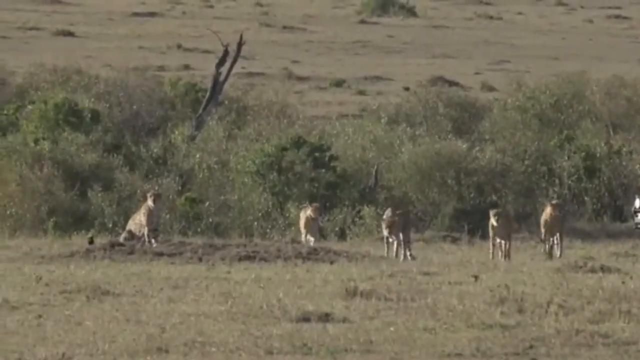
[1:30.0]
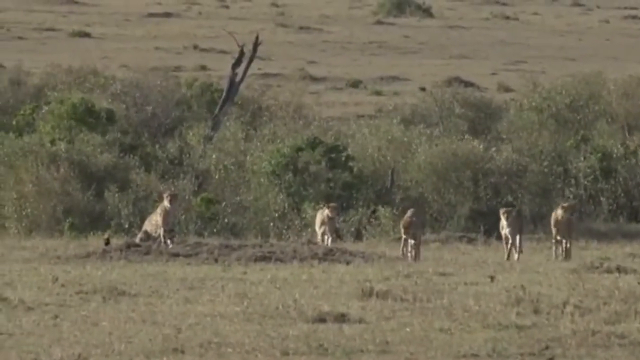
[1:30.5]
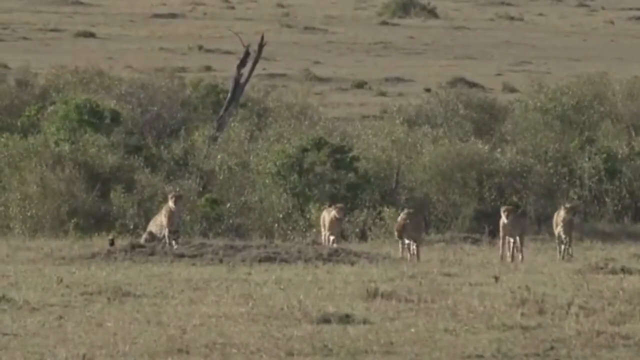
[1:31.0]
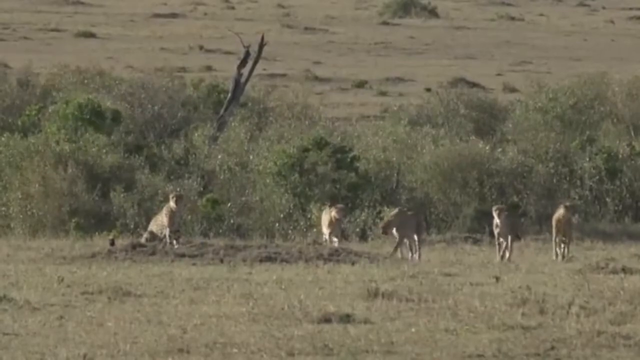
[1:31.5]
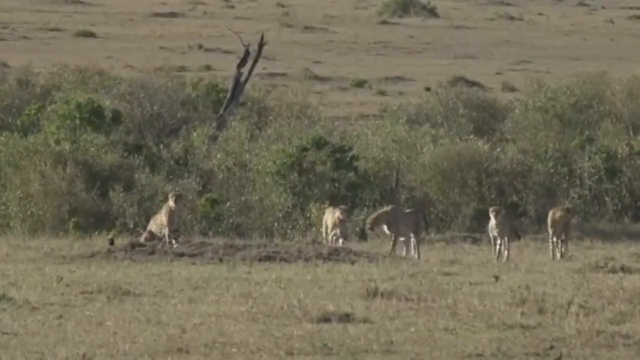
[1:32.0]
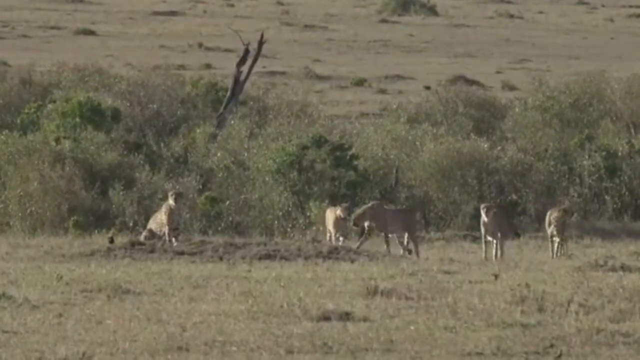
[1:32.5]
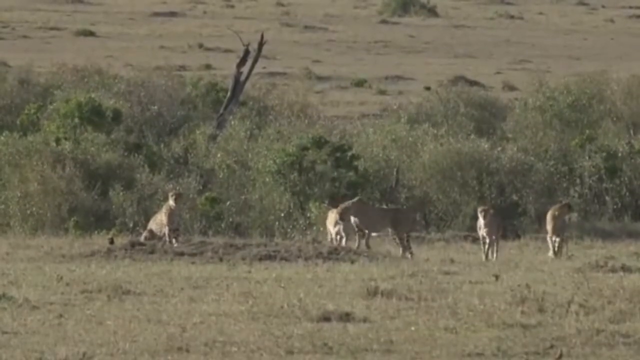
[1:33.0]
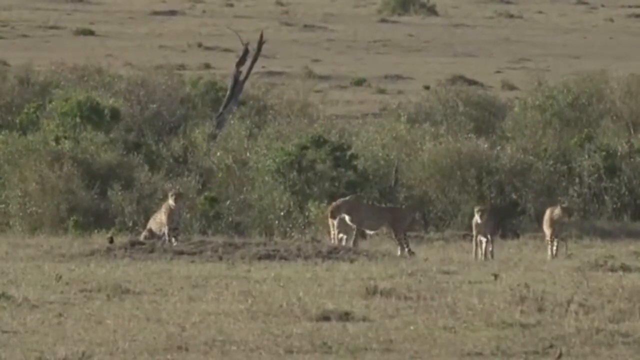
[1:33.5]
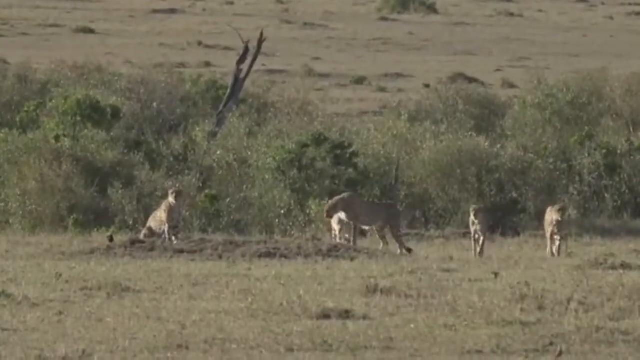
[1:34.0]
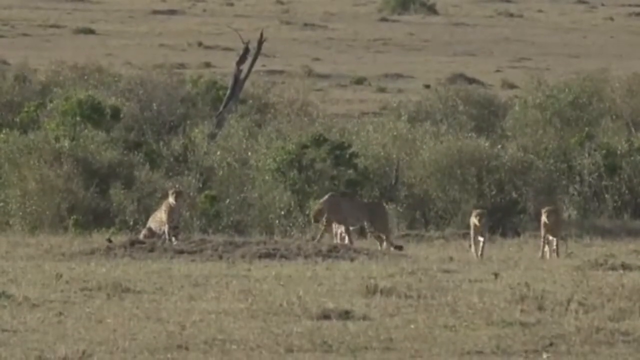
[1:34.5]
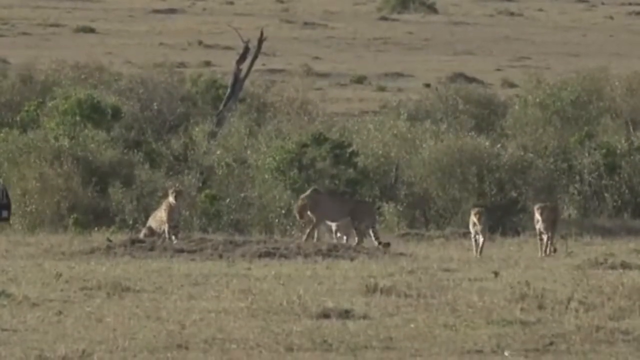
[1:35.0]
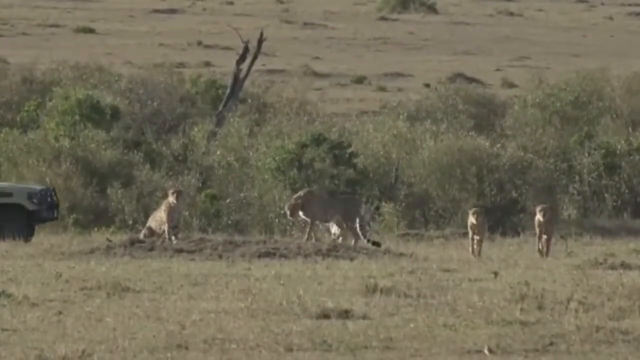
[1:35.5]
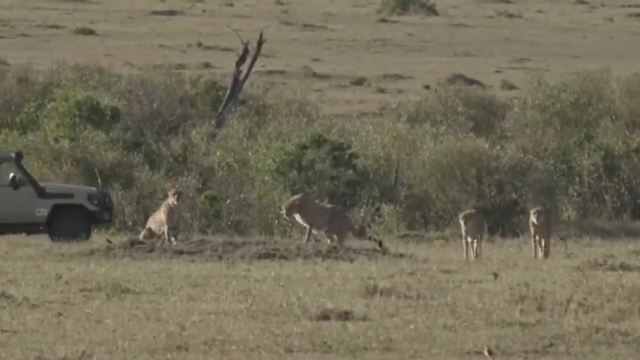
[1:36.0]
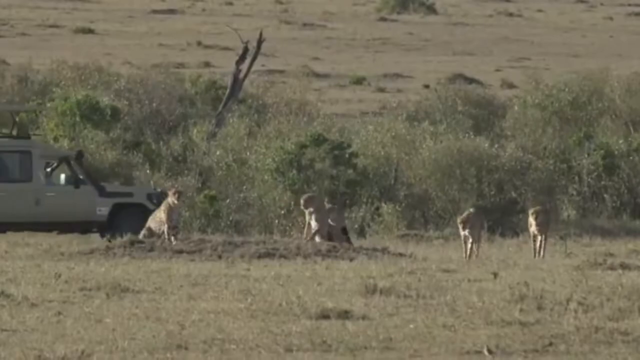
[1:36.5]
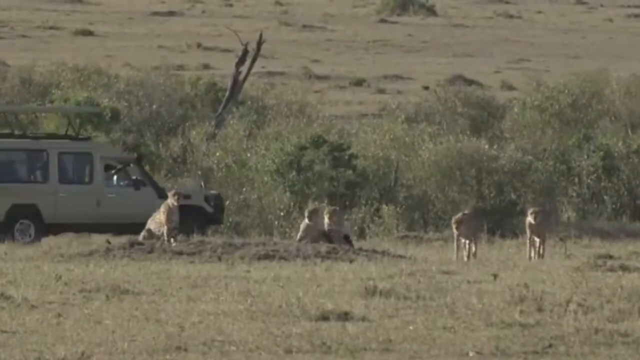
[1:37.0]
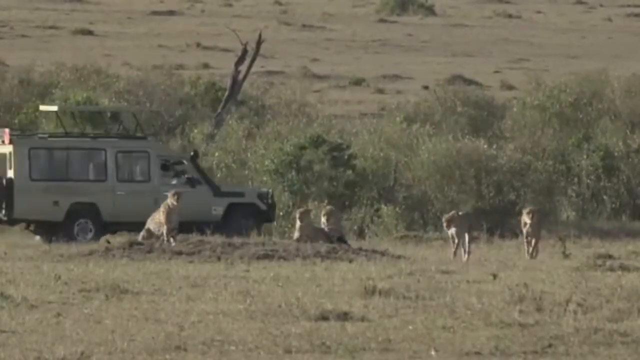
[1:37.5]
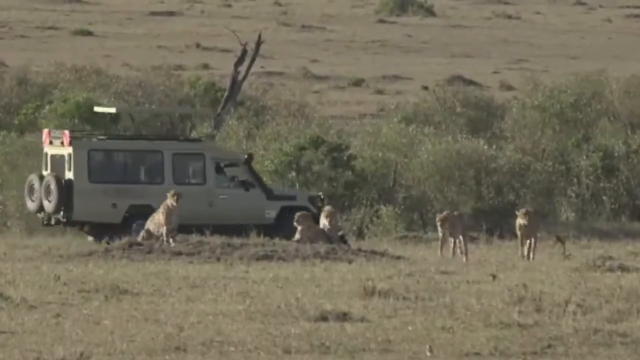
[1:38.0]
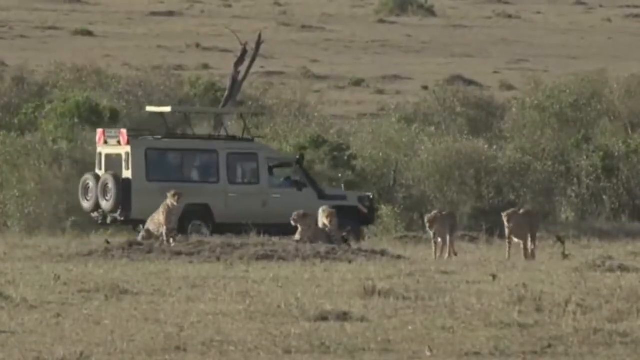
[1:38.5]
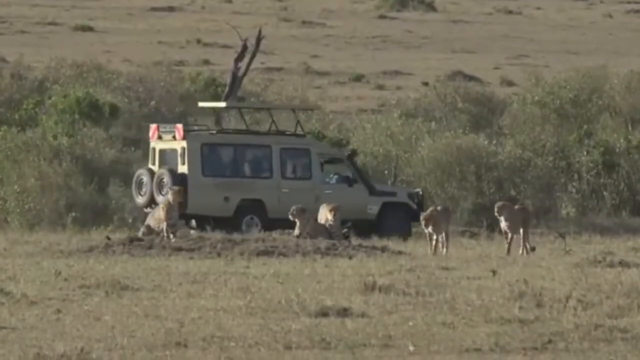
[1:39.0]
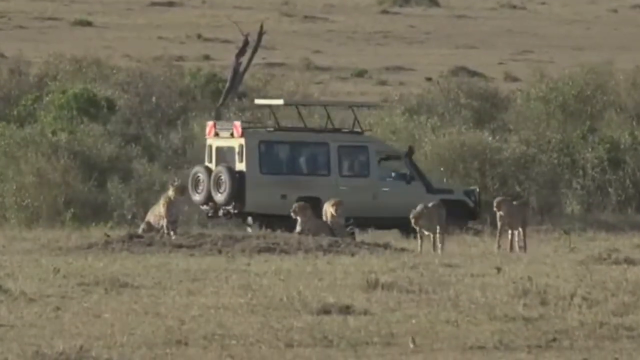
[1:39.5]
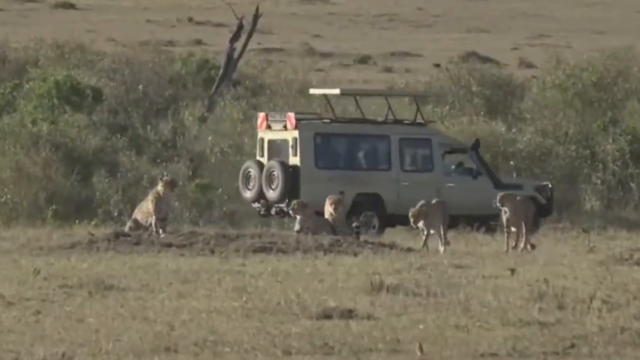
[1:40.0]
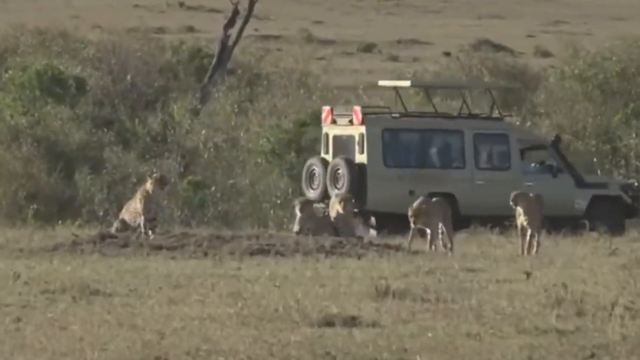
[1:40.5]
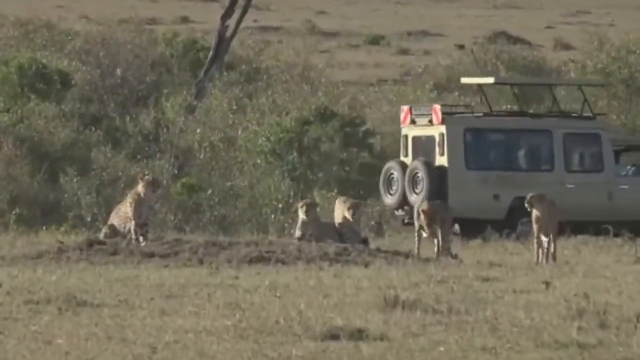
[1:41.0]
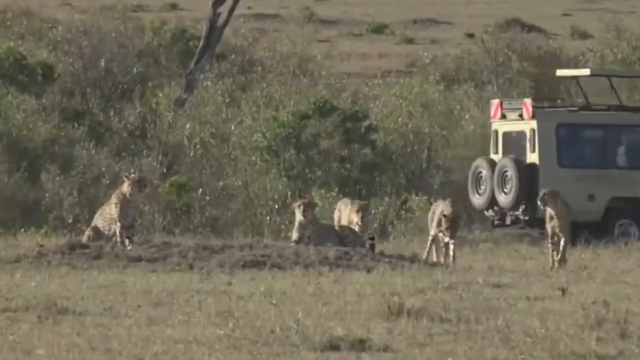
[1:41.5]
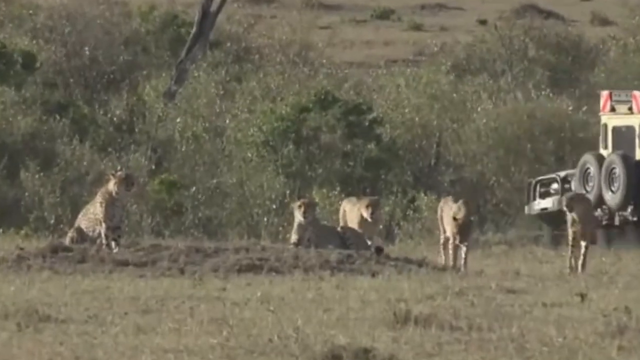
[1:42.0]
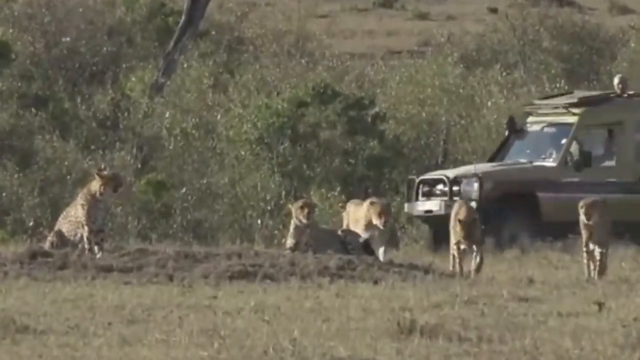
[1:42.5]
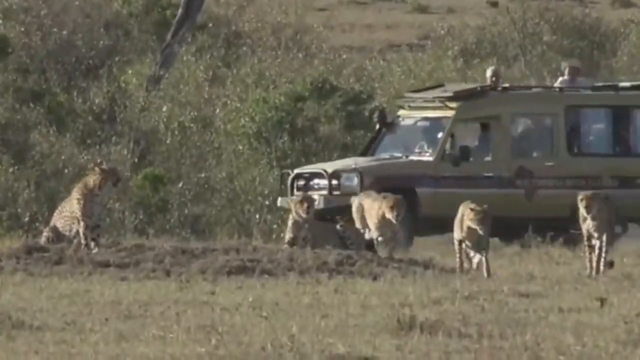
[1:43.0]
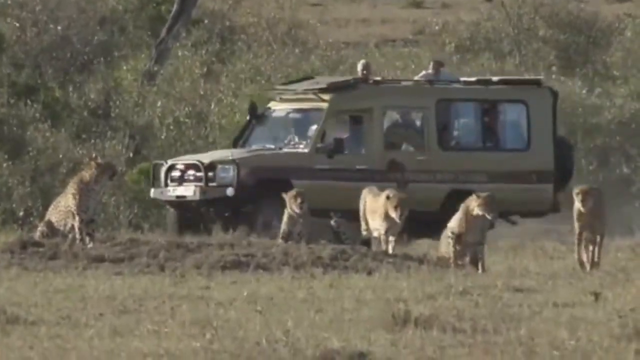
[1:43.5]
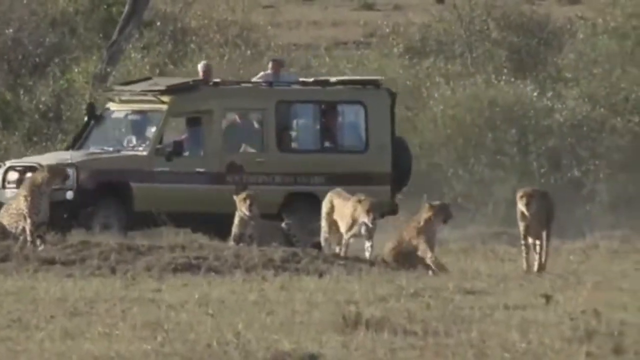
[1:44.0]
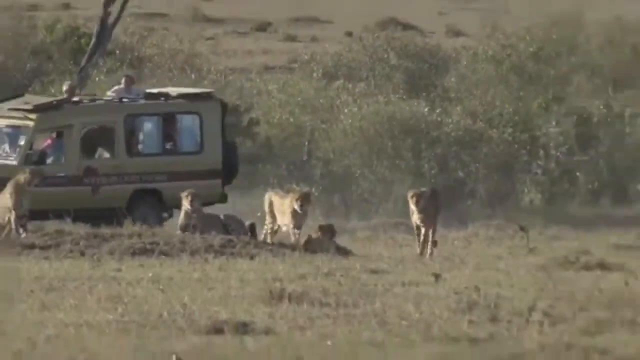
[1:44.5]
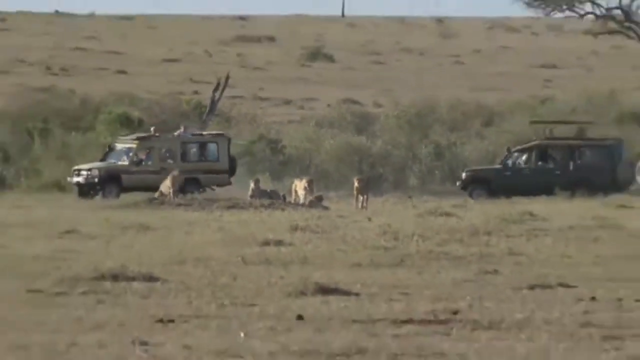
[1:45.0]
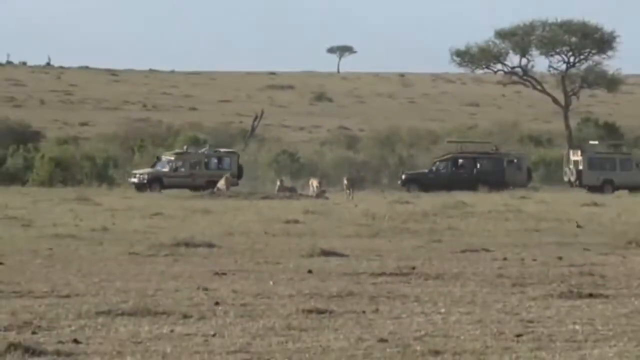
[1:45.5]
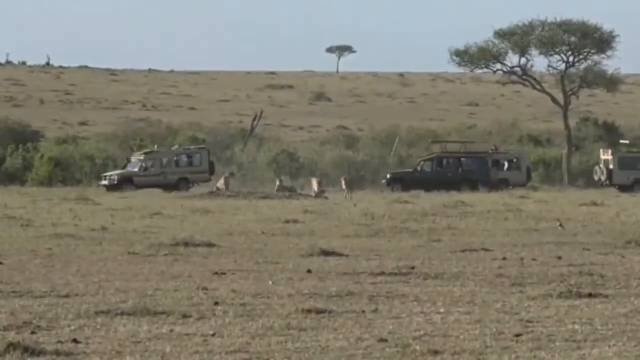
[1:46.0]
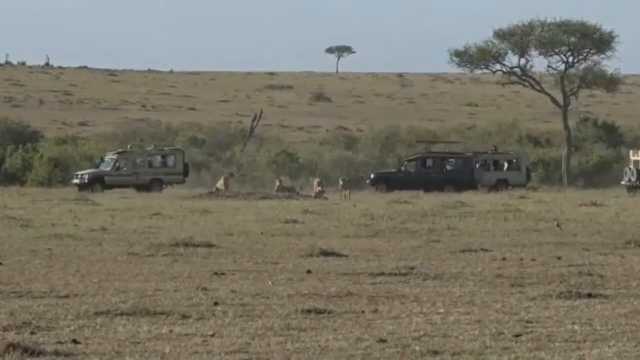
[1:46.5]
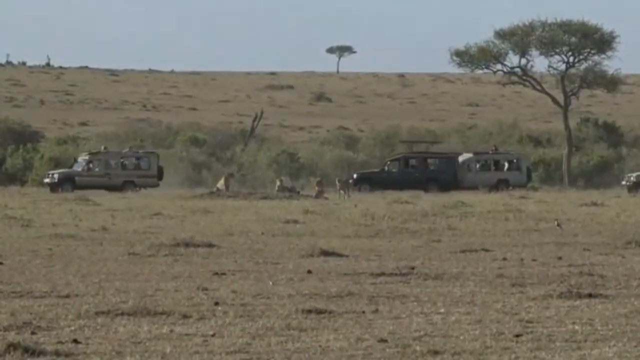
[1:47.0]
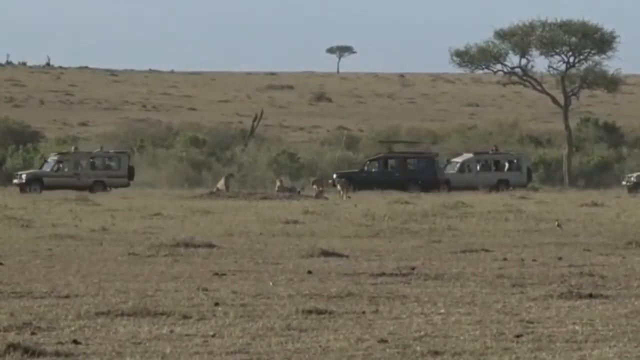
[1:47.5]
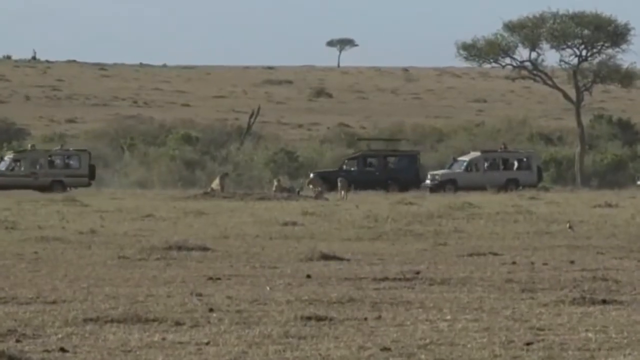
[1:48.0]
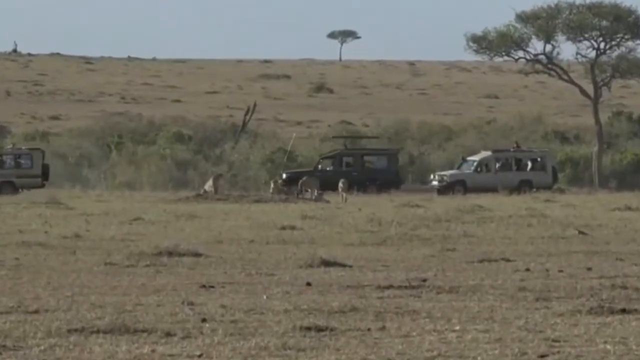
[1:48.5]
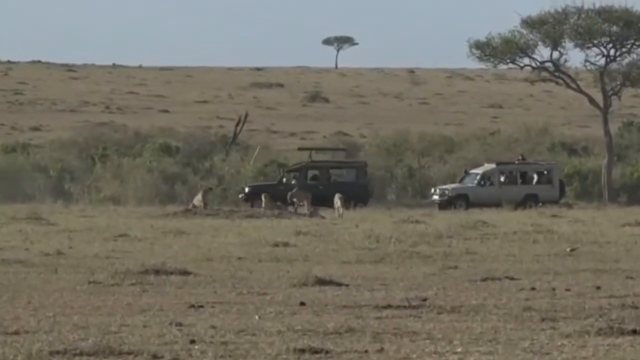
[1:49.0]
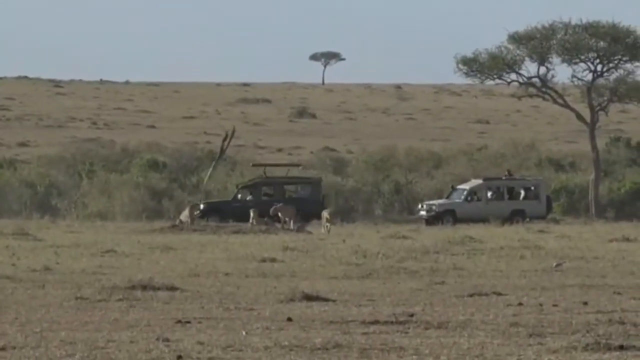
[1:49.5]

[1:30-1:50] Five cheetahs are in the wilderness. The one on the left is seated and the other four slowly walk toward it; they kind of gather in the same basic area and then sit down. Meanwhile, in the background behind the cheetahs, there are a number of almost safari-like vehicles with raised roofs where people inside can stand up and look outside. At least one white vehicle with two spare tires on its back drives past, then another vehicle with people's heads sticking out of the roof drives past the other vehicle in the opposite direction. The camera zooms out, showing a total of four vehicles: two going to the left, one that seems to be stationary and looking at the cheetahs, and another with just its very front bonnet visible. There are a few sparse trees in an otherwise almost desert-like landscape.